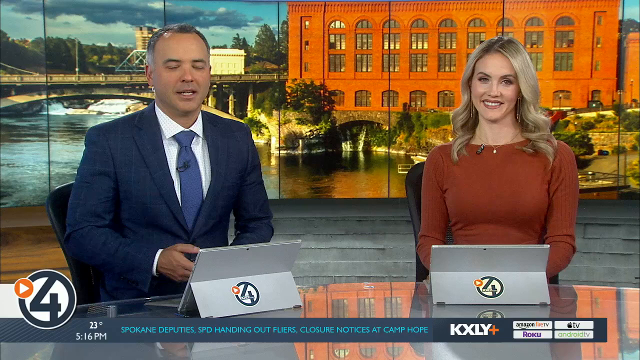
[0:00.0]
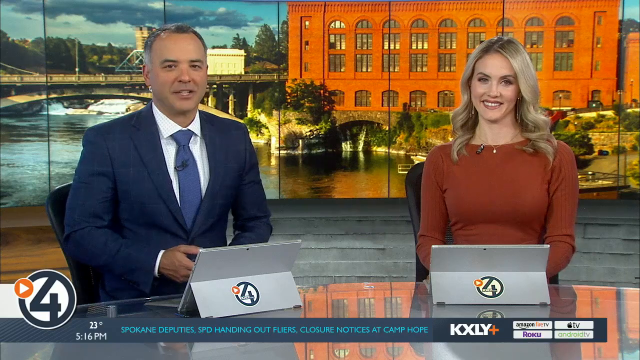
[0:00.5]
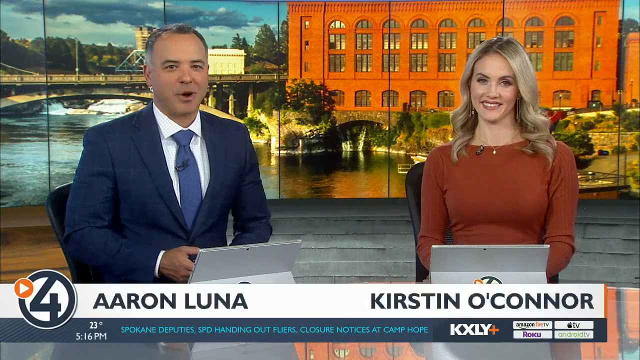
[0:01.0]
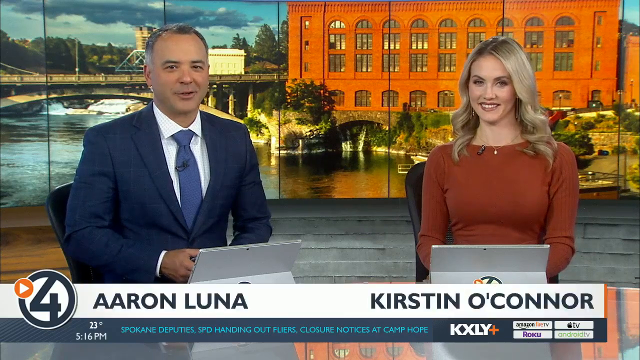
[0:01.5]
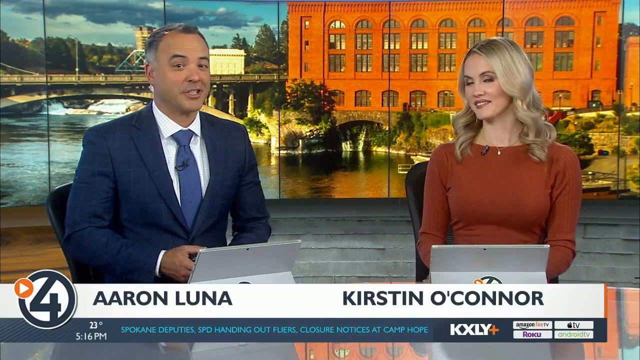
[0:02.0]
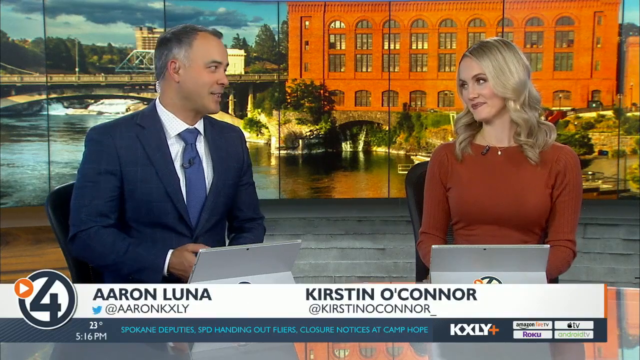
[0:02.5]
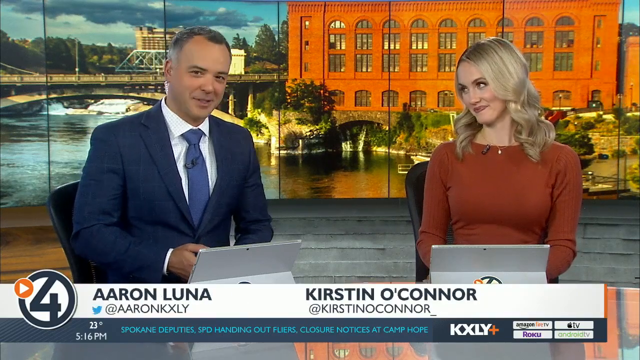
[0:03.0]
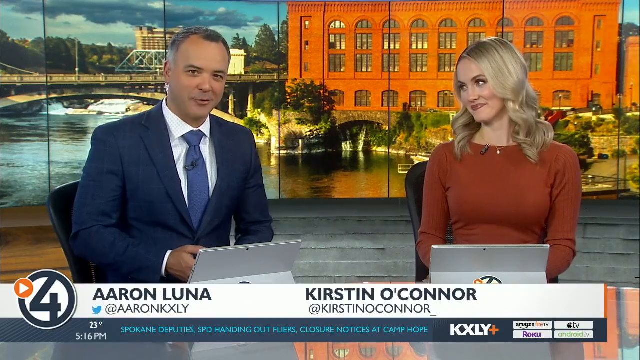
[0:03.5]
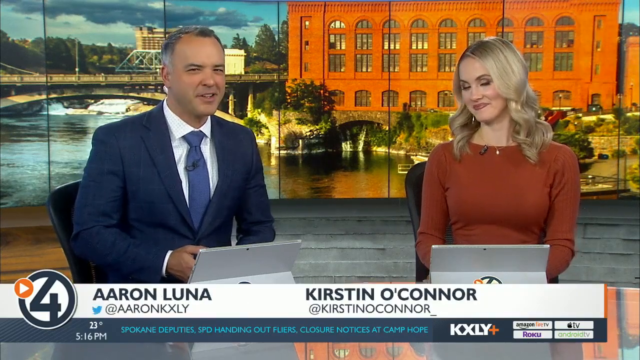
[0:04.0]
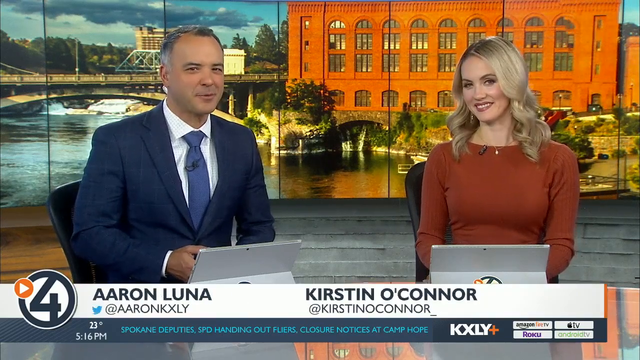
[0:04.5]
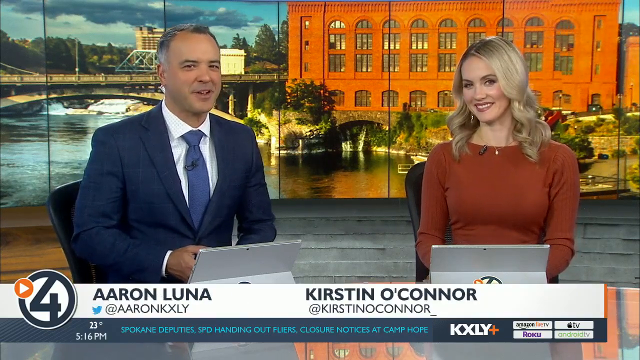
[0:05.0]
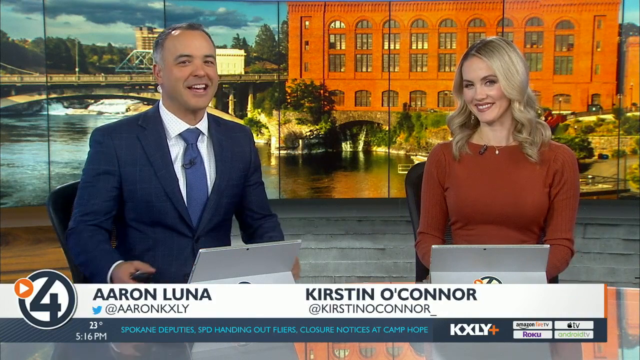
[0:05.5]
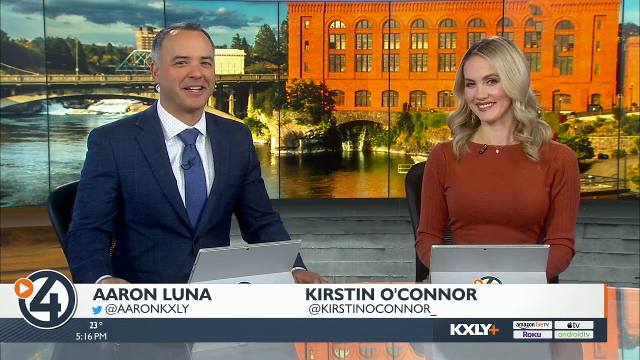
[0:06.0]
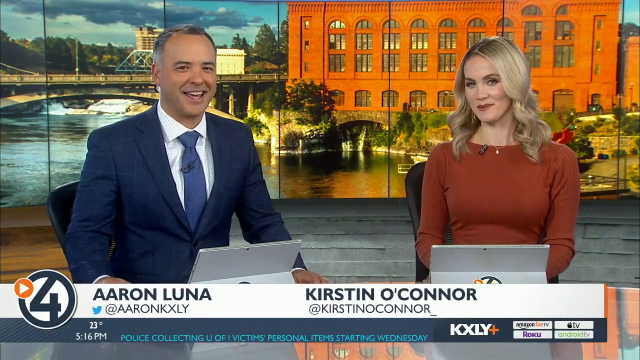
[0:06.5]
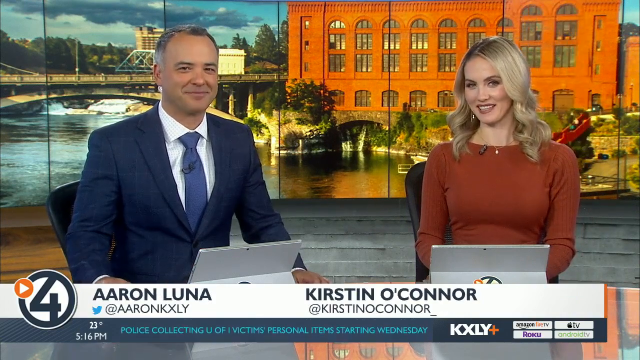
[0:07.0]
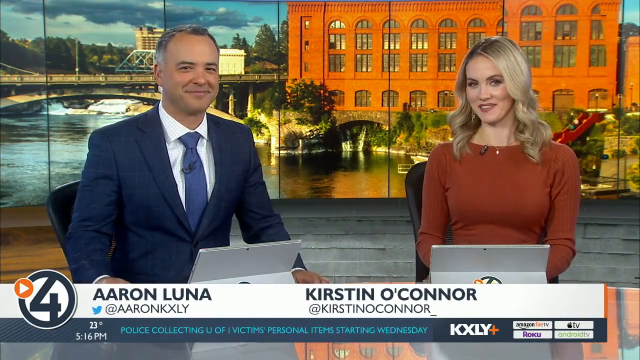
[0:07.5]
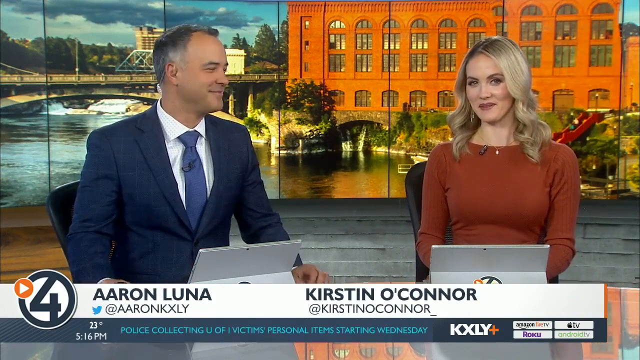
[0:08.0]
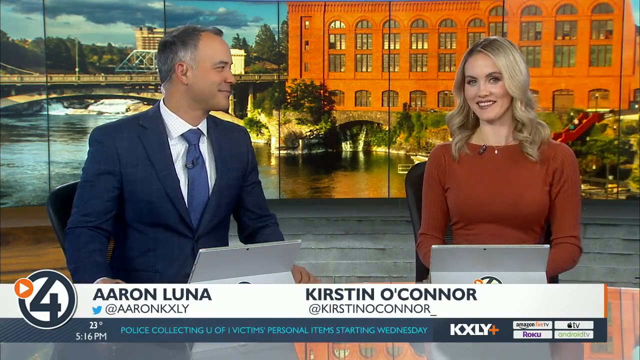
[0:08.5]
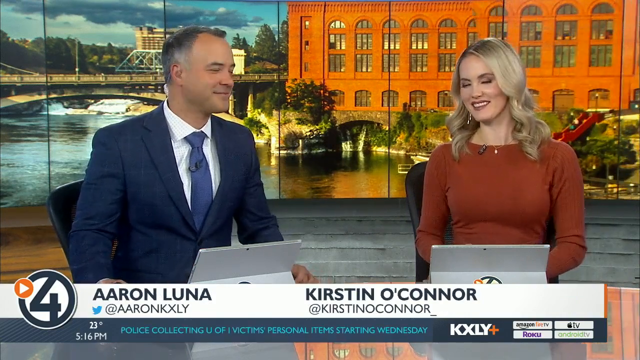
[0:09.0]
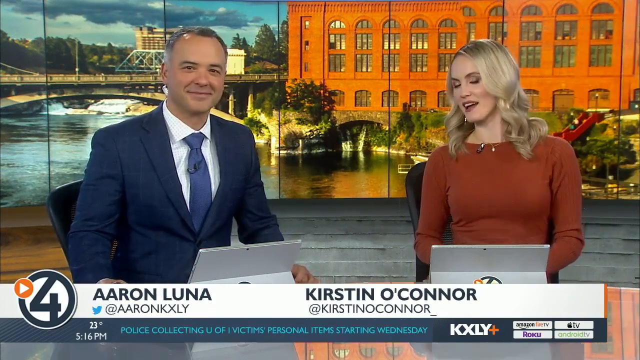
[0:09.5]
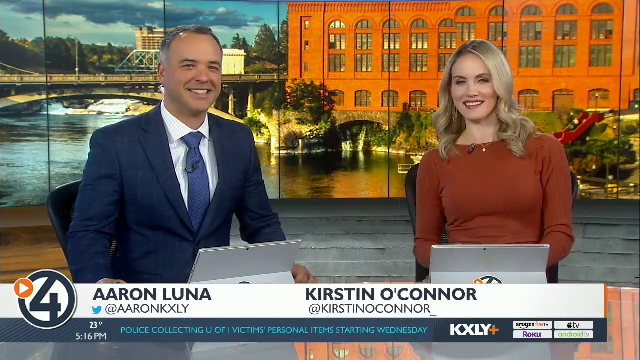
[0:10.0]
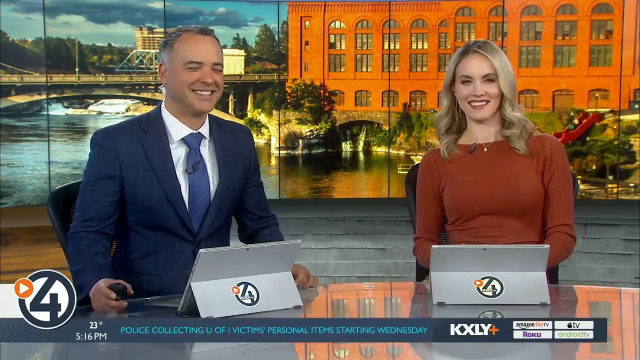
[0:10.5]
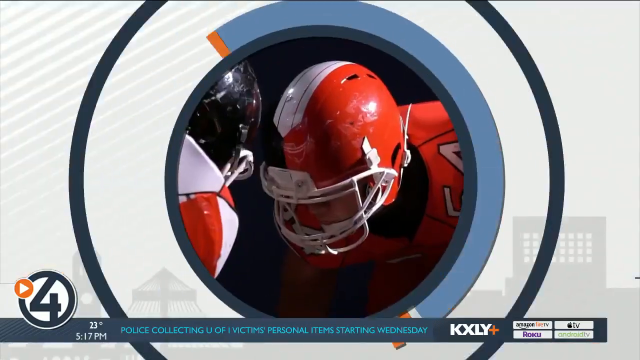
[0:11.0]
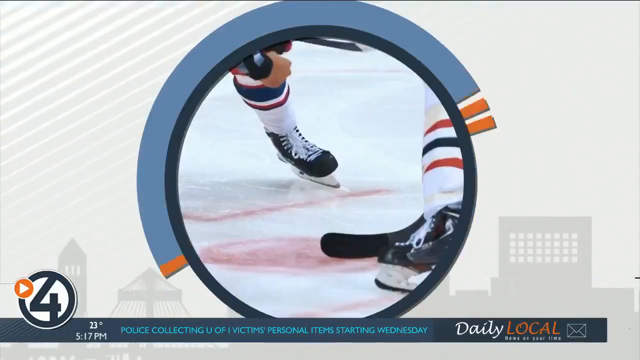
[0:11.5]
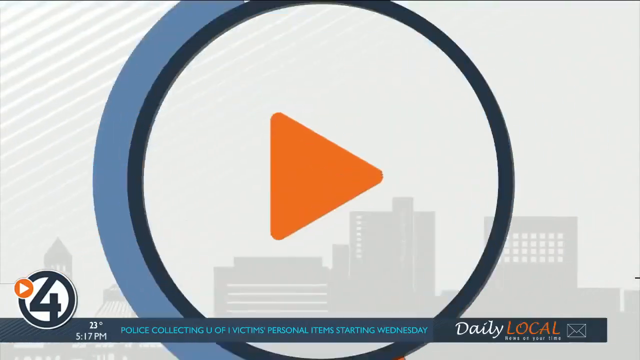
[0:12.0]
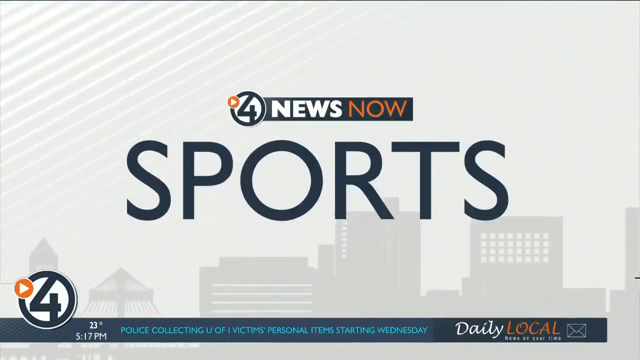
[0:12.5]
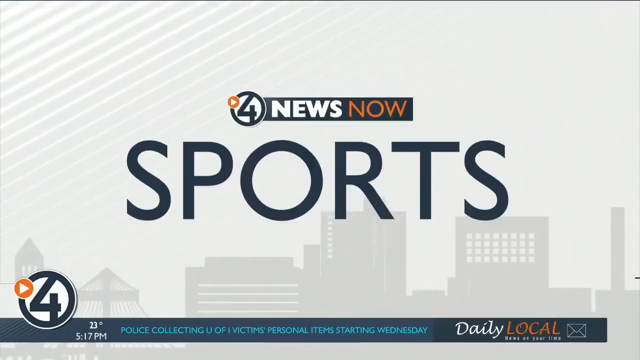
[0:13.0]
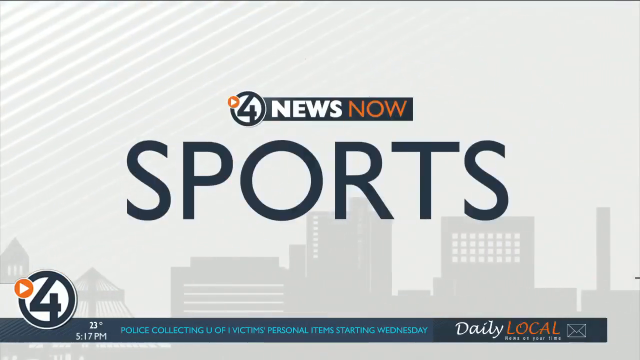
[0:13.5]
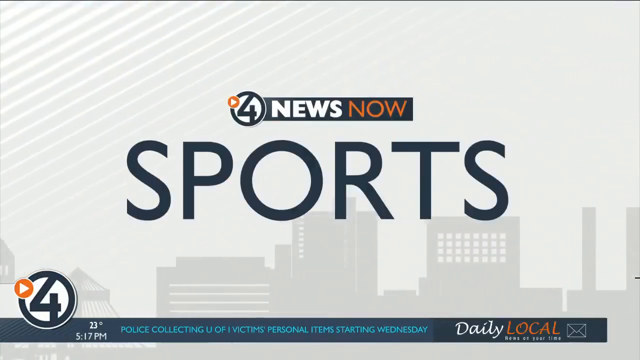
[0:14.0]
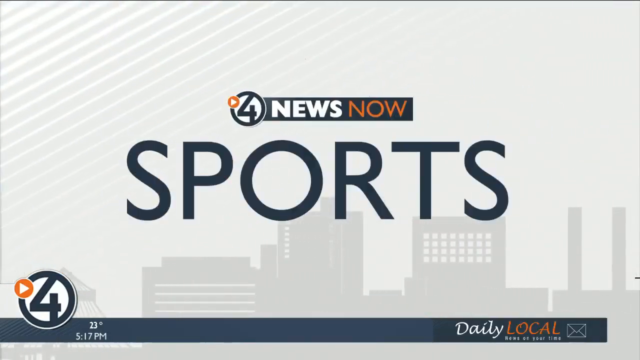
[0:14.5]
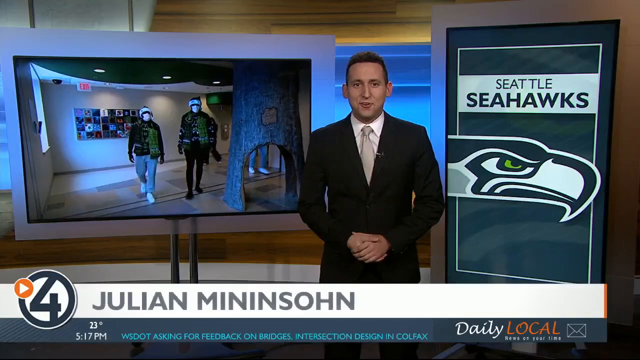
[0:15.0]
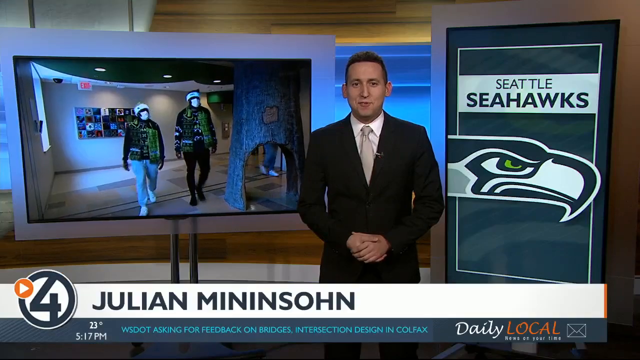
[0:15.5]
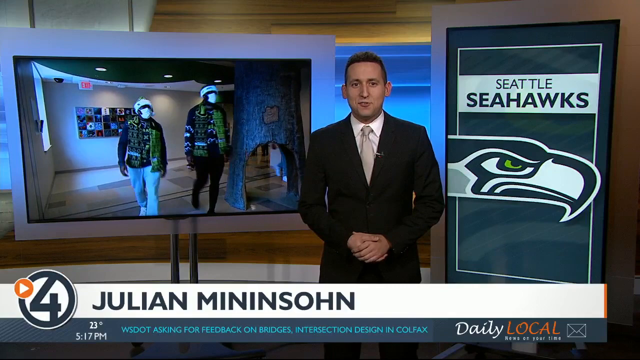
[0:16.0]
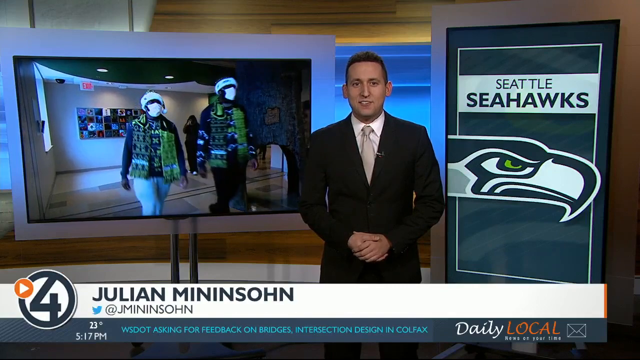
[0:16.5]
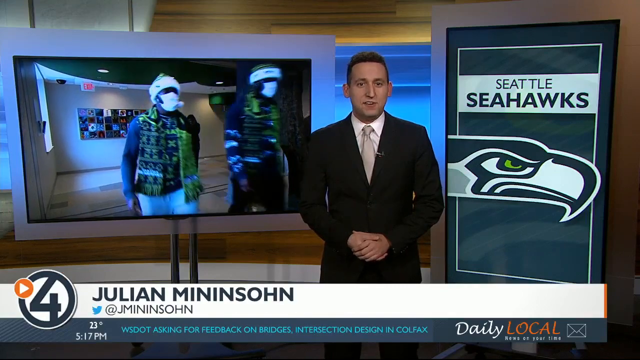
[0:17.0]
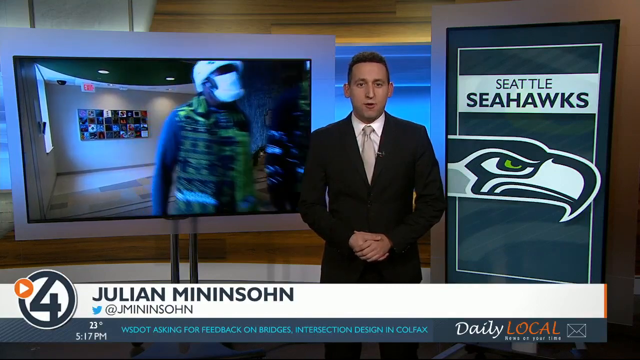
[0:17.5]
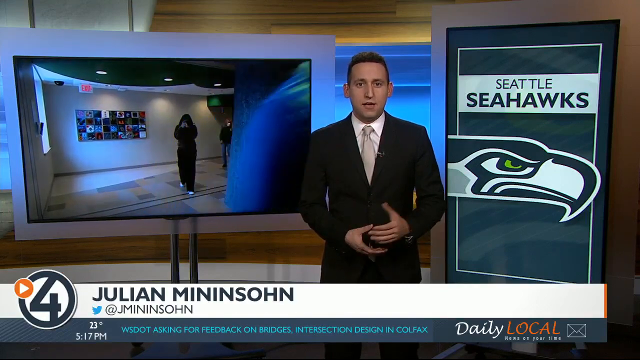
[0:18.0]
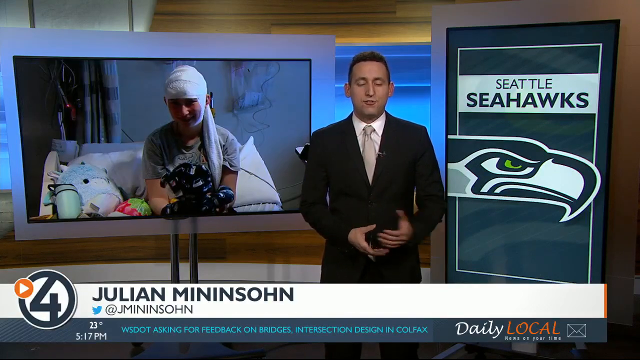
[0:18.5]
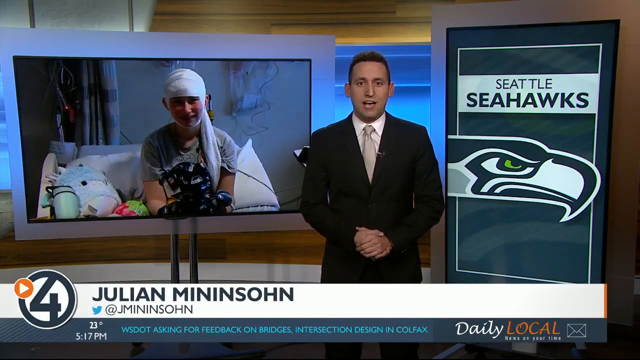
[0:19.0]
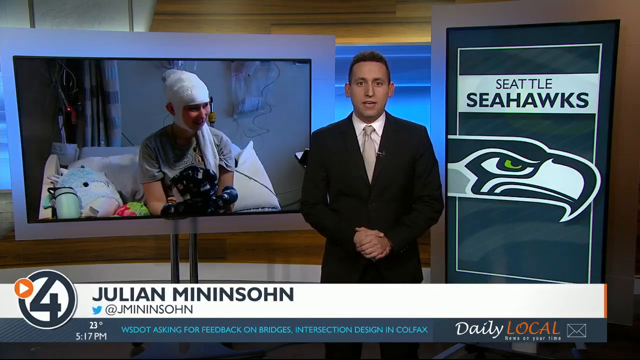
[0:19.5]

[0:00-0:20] The video appears to be a television program with two telecasters, one named Arron Luna and the other named Kirstin O'Connor. They appear to work for channel number 4, identified by the call letters KXLY. The video appears to transition to the sports section of the news, known as NewsNow Sports. A finely dressed gentleman in a black suit with a white tie, identified as Julian Mininsohn, presents a segment that appears to reference the Seattle Seahawks football team. It apparently shows a child in a hospital and a man, presumably a Seattle Seahawks player, coming into the hospital. He is dressed in the traditional blue and green colors of the Seattle Seahawks and wears a Santa Claus hat in the same colors, along with a protective mask.